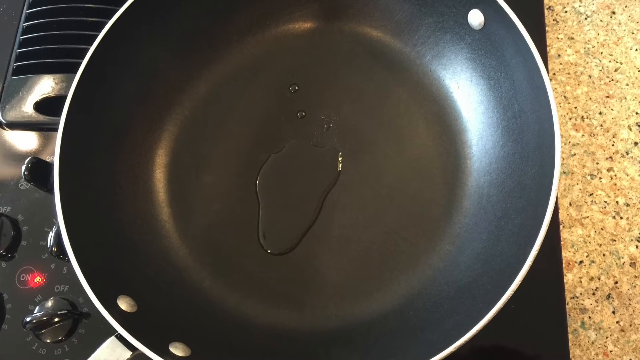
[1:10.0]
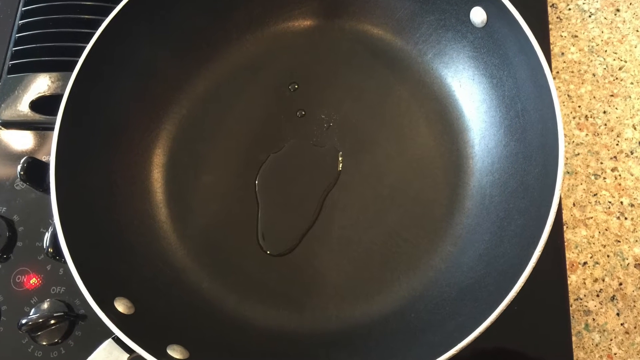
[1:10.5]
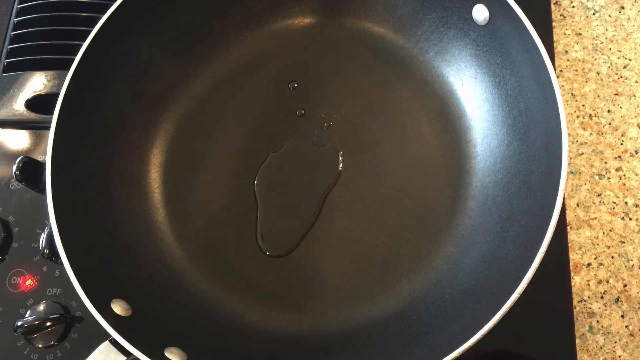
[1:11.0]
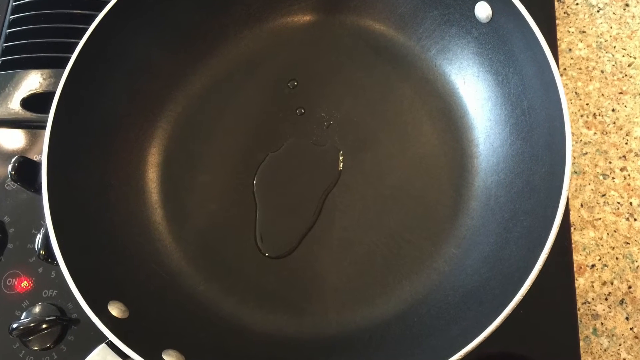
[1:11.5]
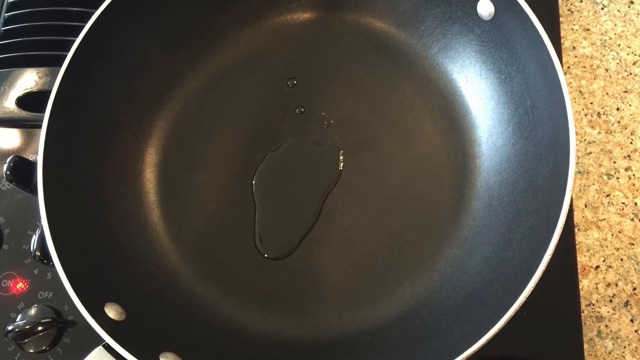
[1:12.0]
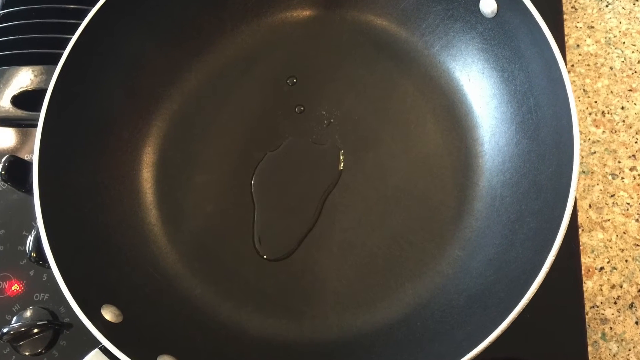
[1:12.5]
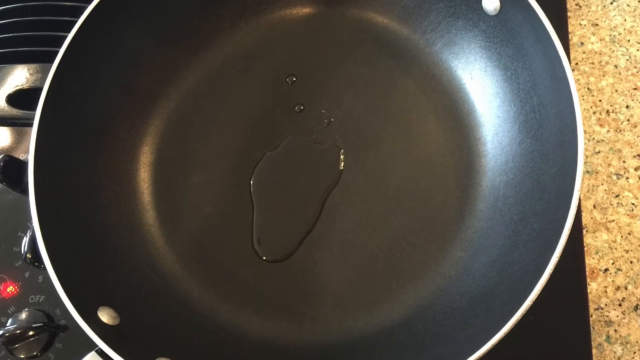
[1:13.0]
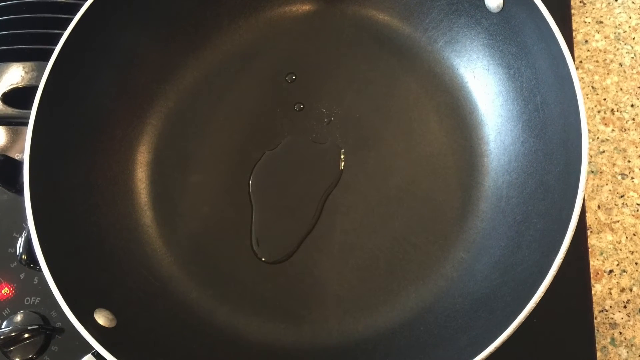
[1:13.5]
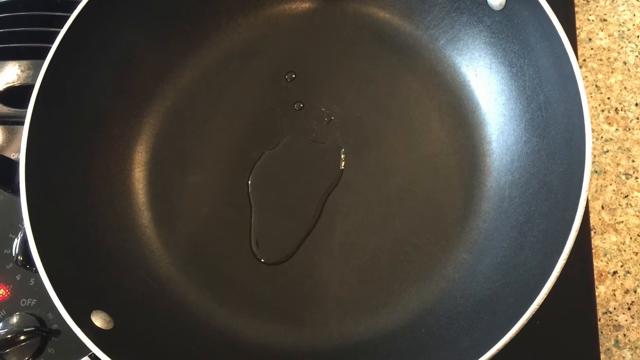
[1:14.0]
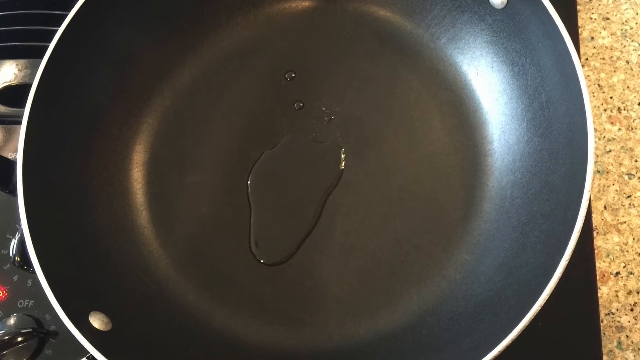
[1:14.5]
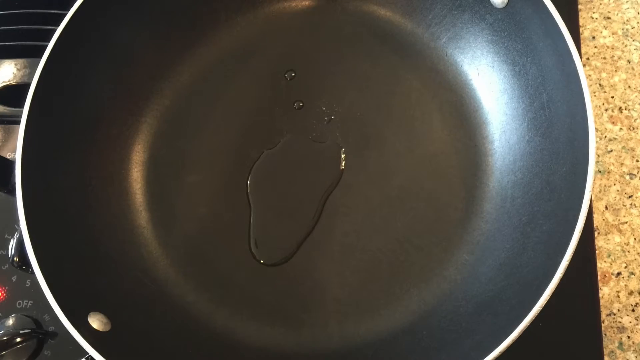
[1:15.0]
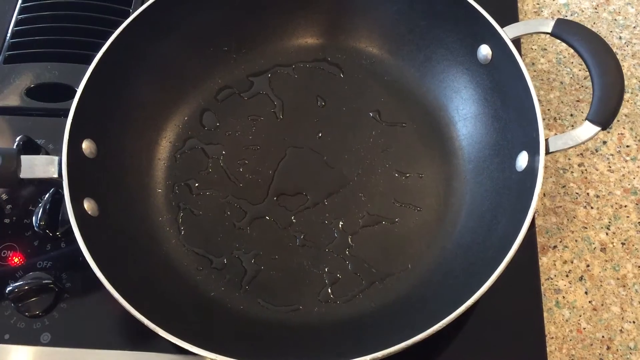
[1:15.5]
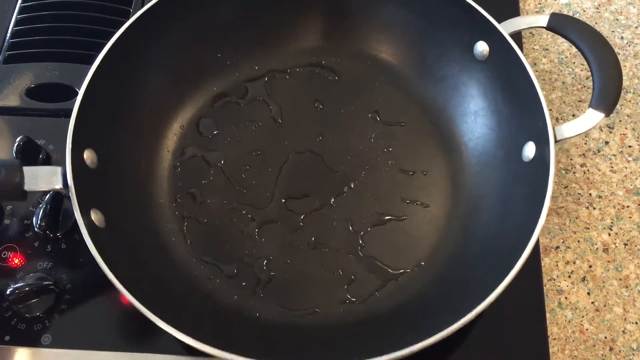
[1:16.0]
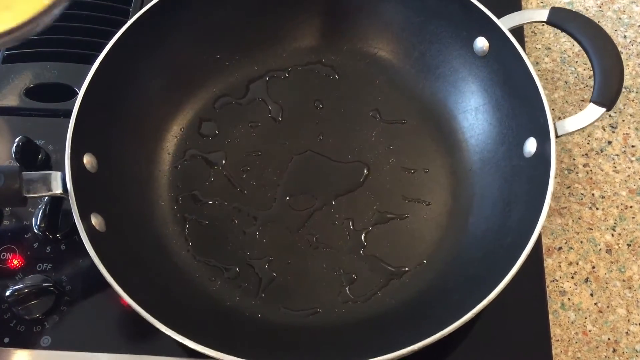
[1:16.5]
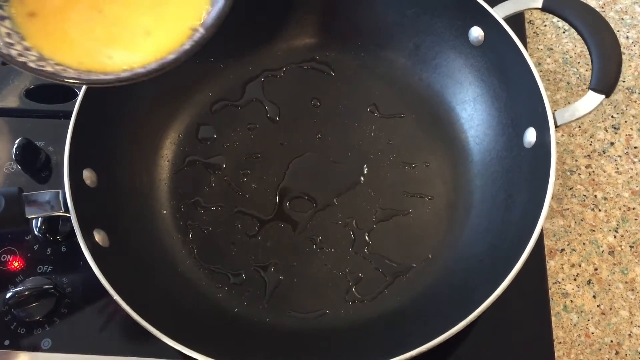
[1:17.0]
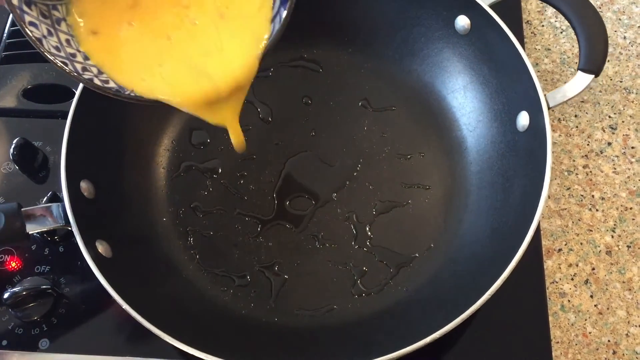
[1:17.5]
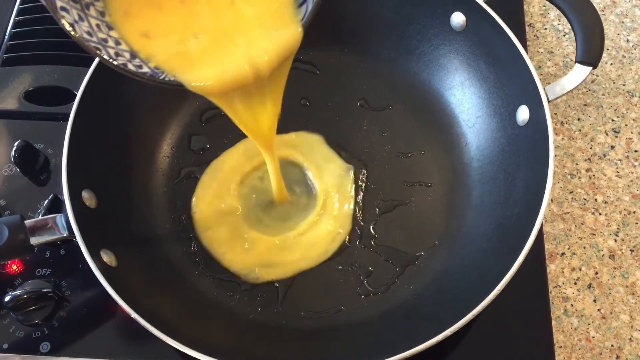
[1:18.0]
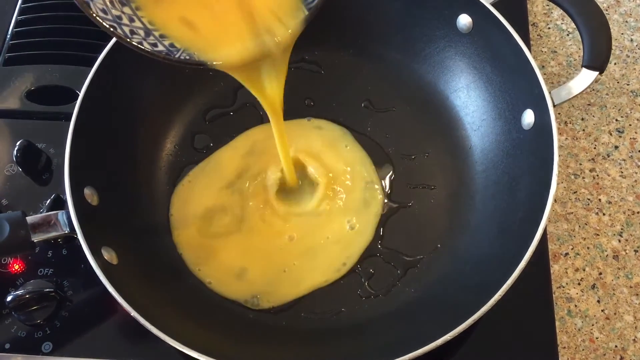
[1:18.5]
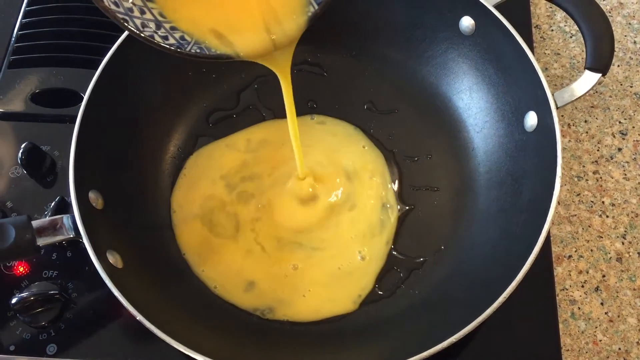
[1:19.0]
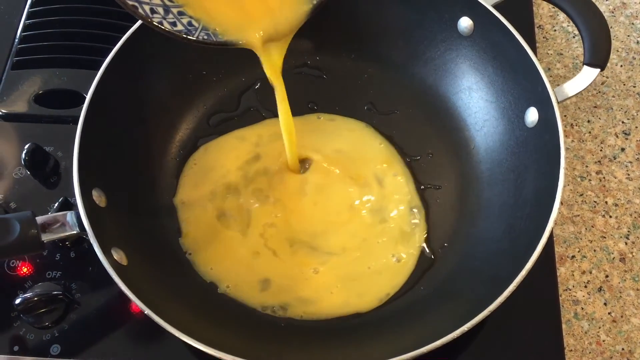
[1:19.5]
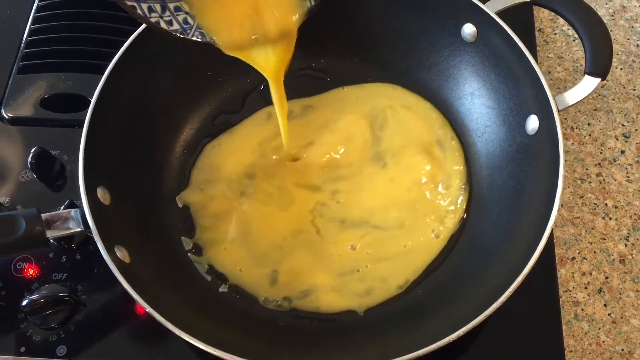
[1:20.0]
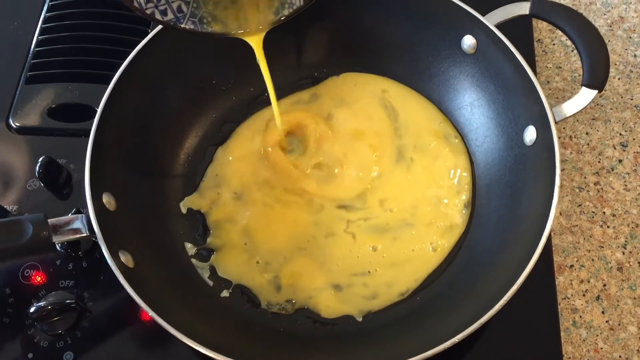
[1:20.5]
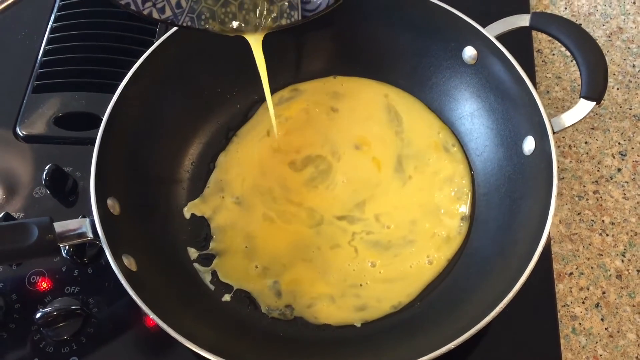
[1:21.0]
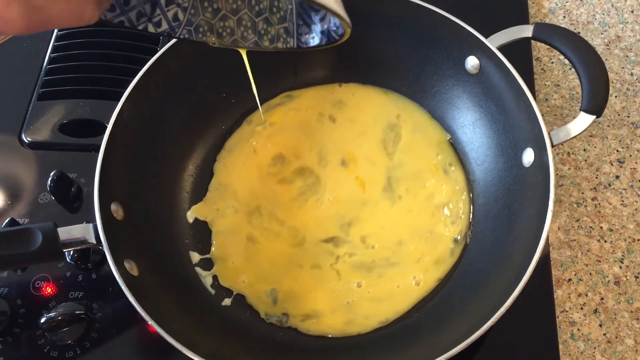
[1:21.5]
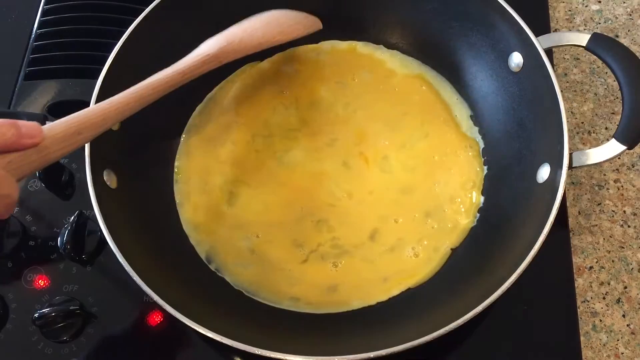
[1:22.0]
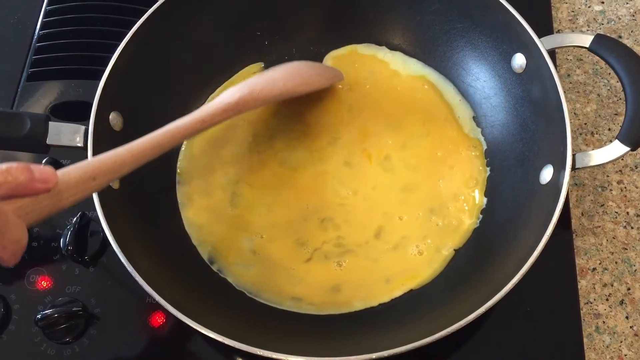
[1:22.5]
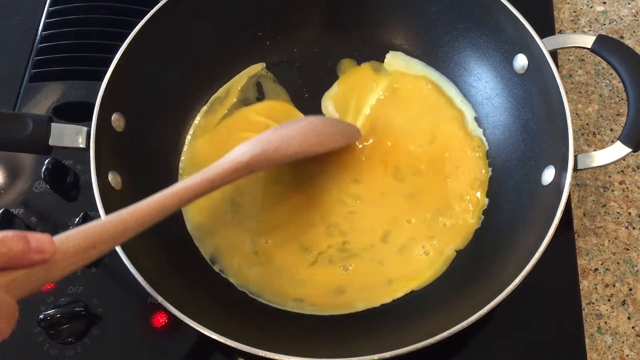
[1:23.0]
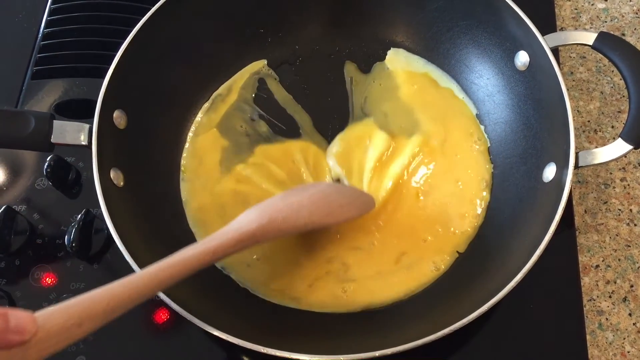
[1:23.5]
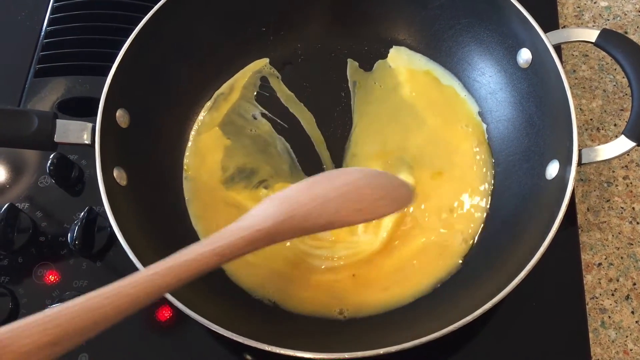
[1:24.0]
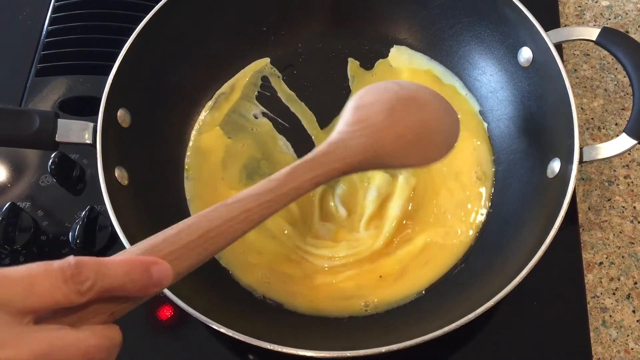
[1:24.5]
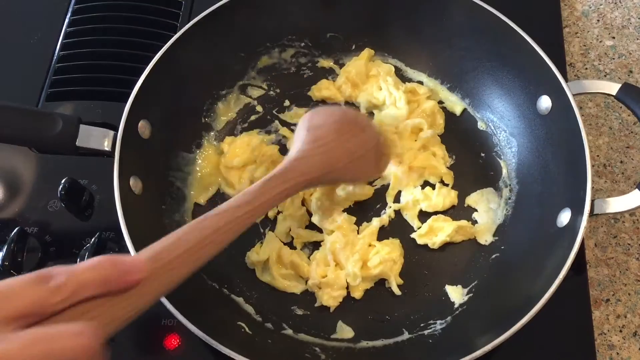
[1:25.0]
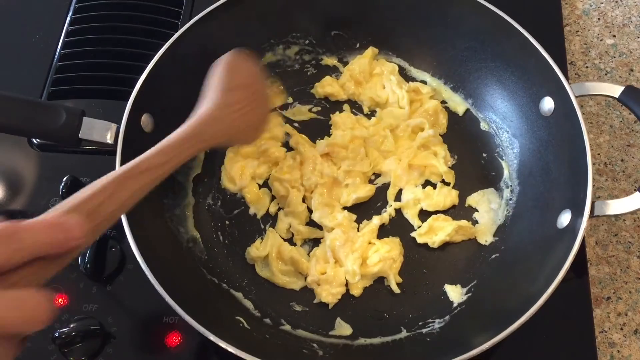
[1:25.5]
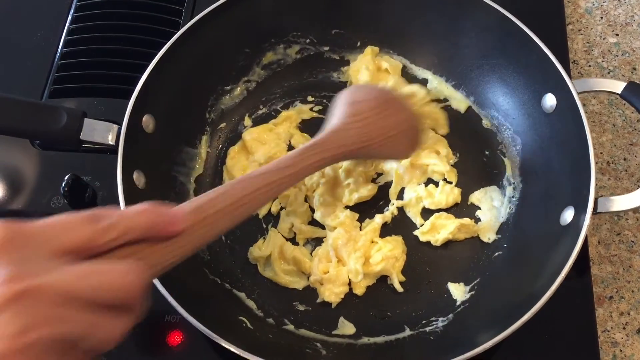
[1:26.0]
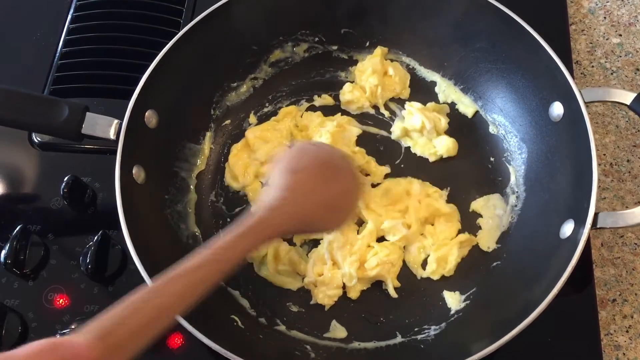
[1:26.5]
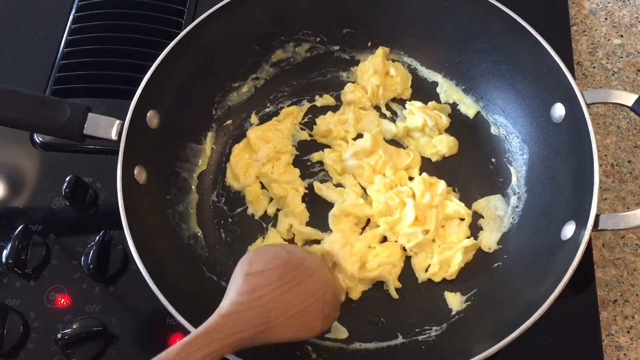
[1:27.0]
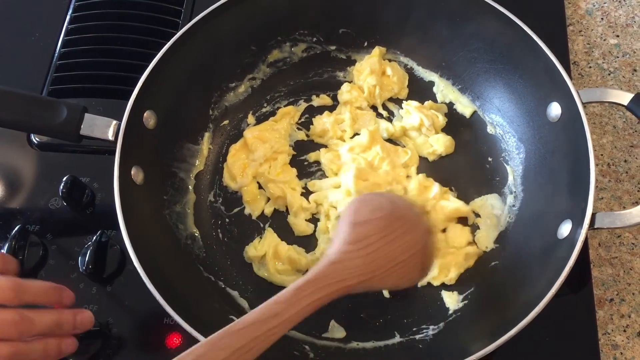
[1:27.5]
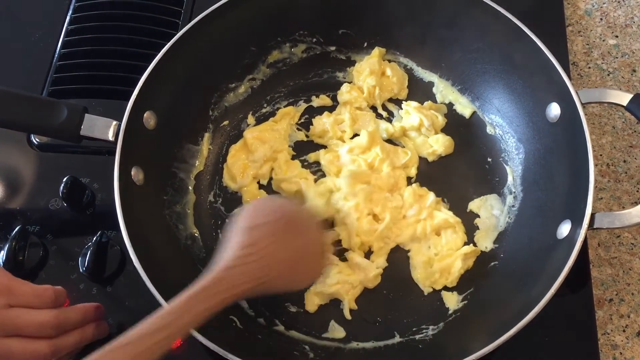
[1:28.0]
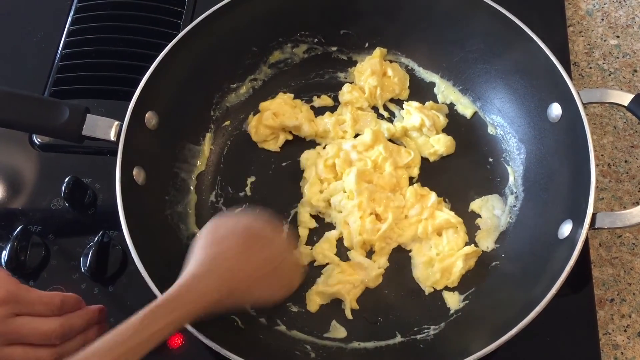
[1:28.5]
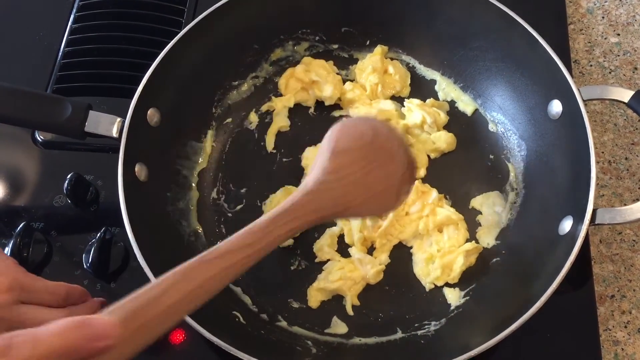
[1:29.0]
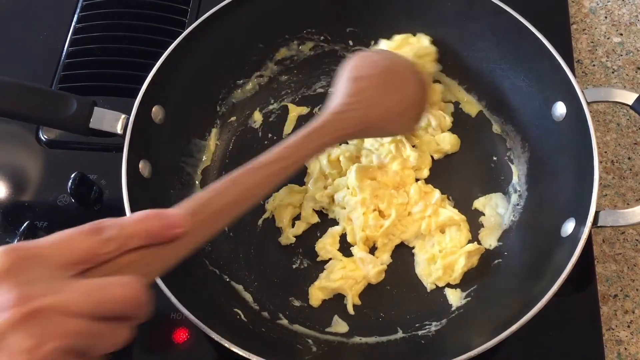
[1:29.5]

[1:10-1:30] The shot is mostly still, without movement. The oil blob is white toward the top and curves as it comes down, especially on the left side, rounding off at the bottom. The light is brighter at the top right, with a white burst all around it, while the left side is darker, a lightish yellowish orange. Silver circles at the top and bottom are the screws that hold the wok together, and two screws hold the handle on the right and left sides. In a time lapse, somebody shakes the wok and the oil disperses. A bowl comes into view and what looks like the egg yolk is slowly poured in, streaming down and spreading into a bigger blob. After a couple of seconds it appears hot enough, and a wood spoon is used to scrape the eggs, which become regular scrambled eggs in different pieces all around, with bundled, curled-over yellow pieces in the middle. Some egg is around where the beveled edge comes up and on the flat part of the wok, where it is crusting and sticking to the sides.